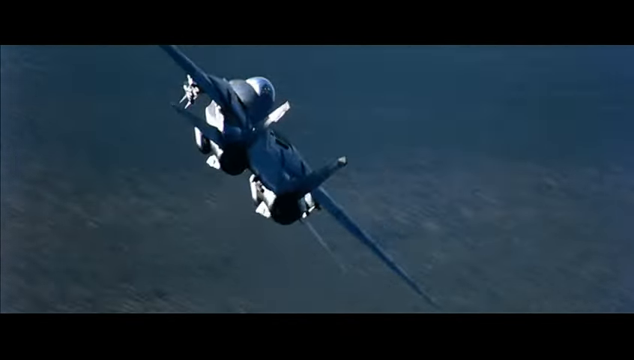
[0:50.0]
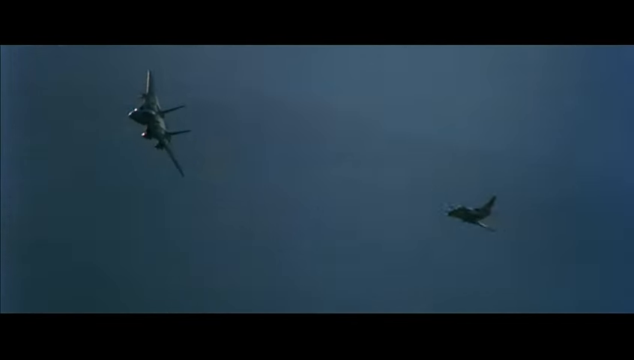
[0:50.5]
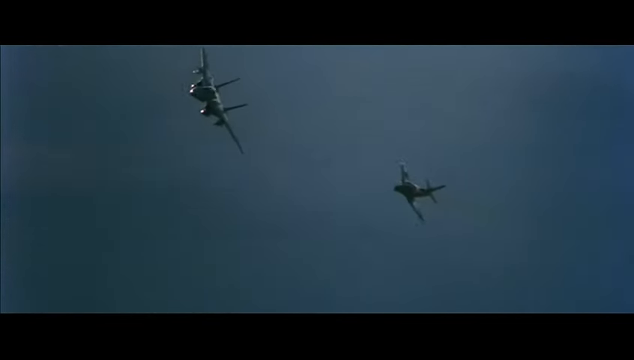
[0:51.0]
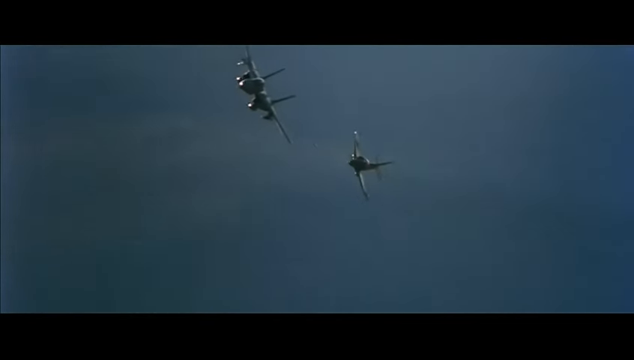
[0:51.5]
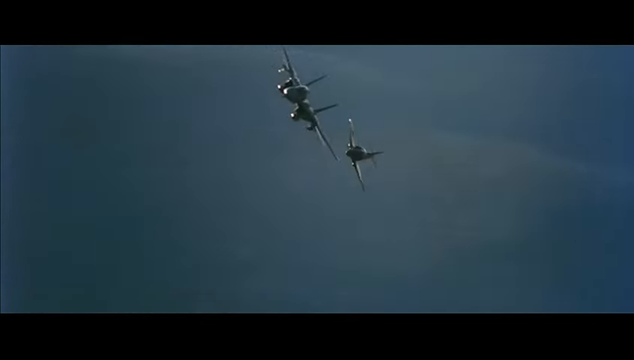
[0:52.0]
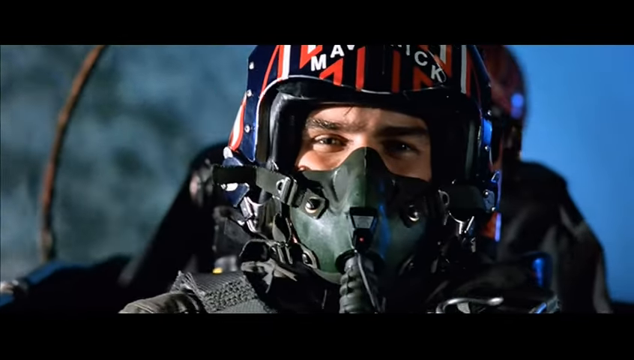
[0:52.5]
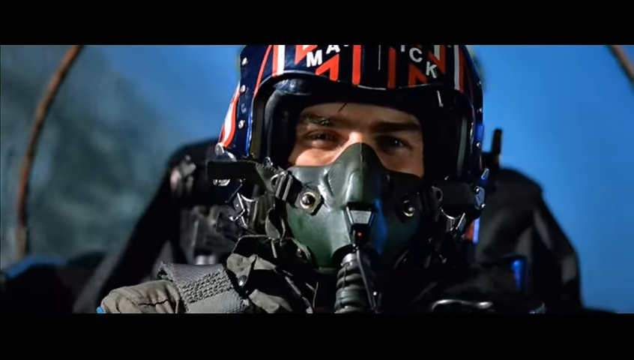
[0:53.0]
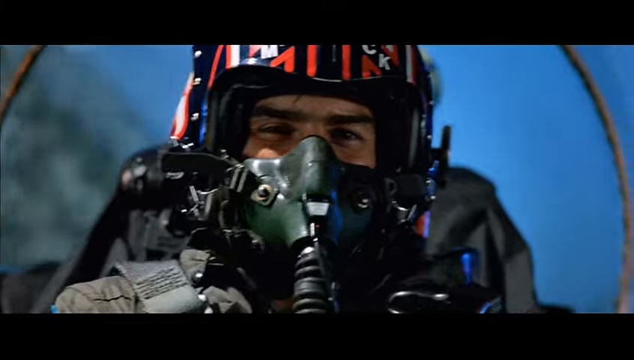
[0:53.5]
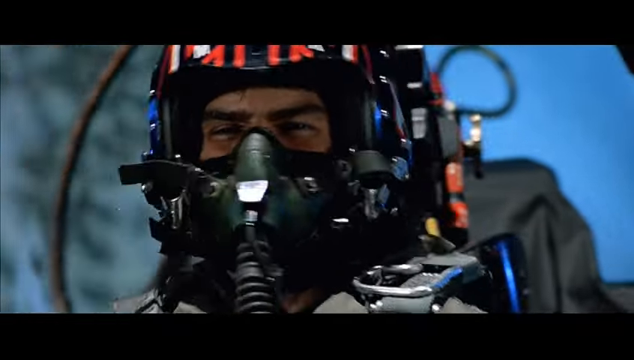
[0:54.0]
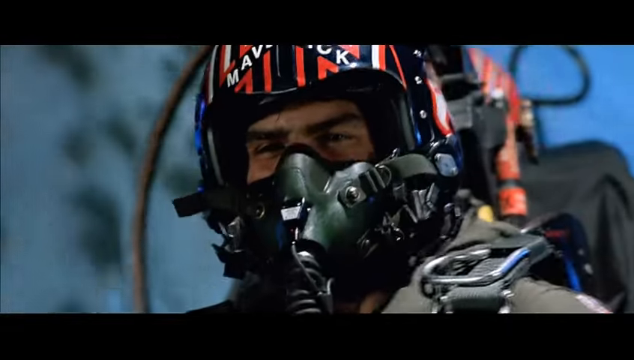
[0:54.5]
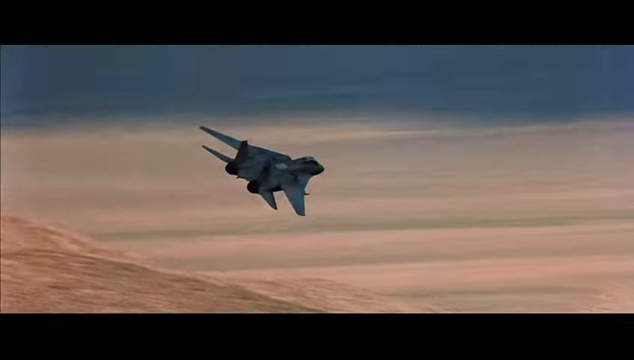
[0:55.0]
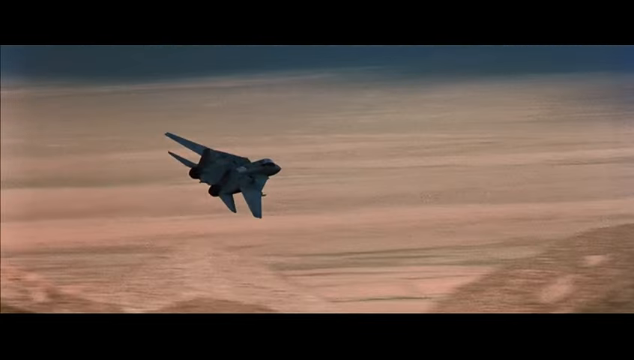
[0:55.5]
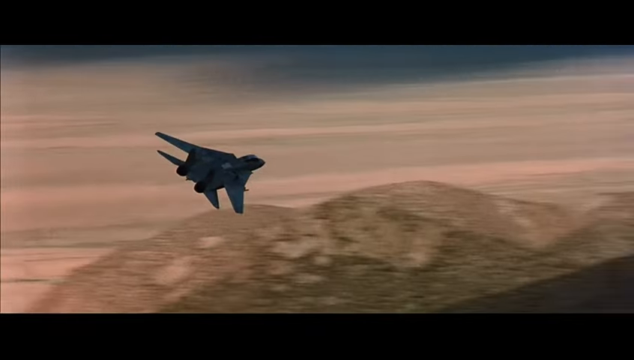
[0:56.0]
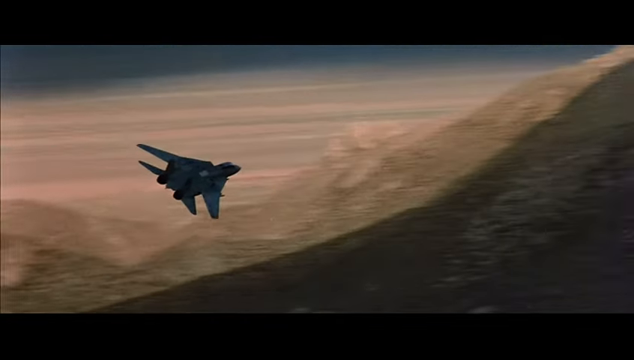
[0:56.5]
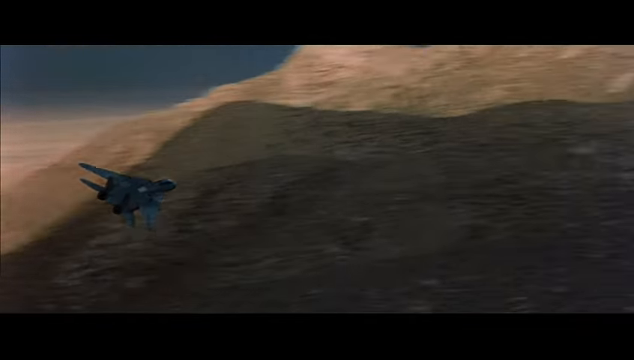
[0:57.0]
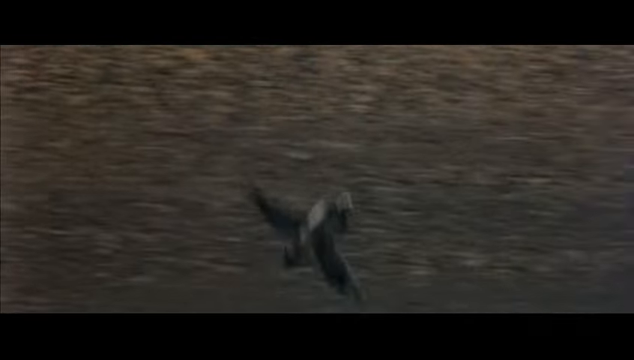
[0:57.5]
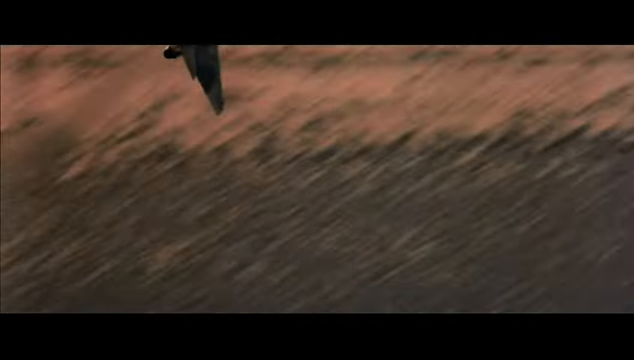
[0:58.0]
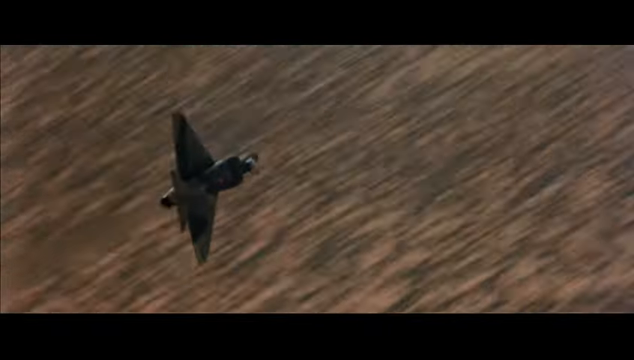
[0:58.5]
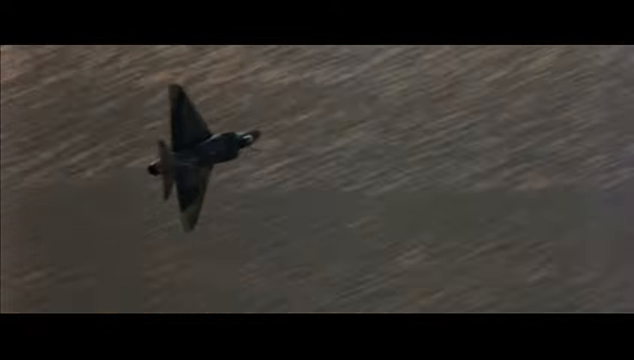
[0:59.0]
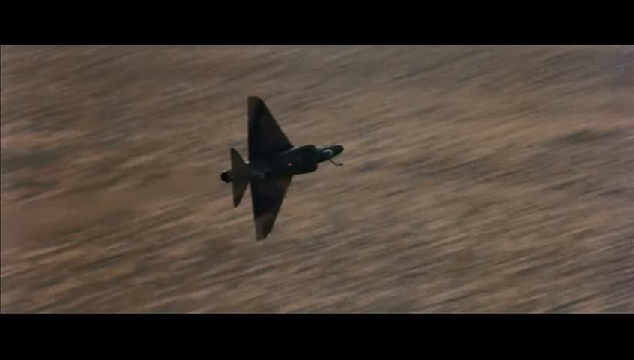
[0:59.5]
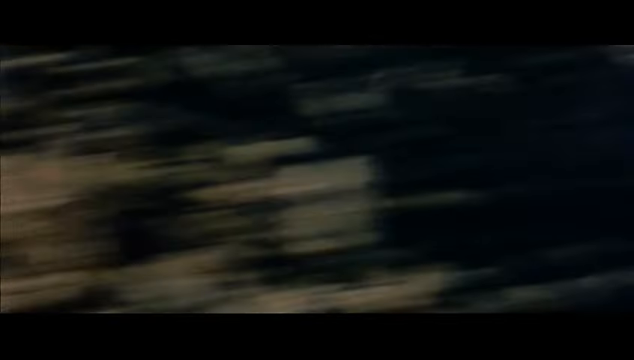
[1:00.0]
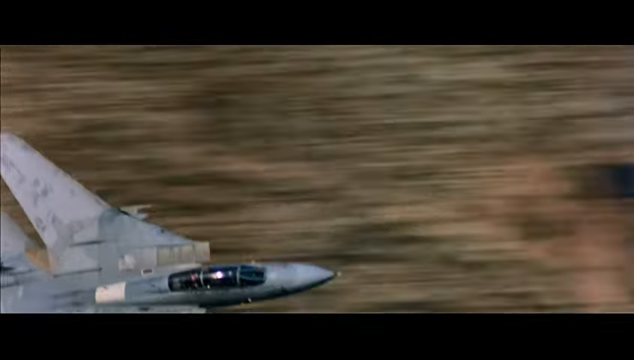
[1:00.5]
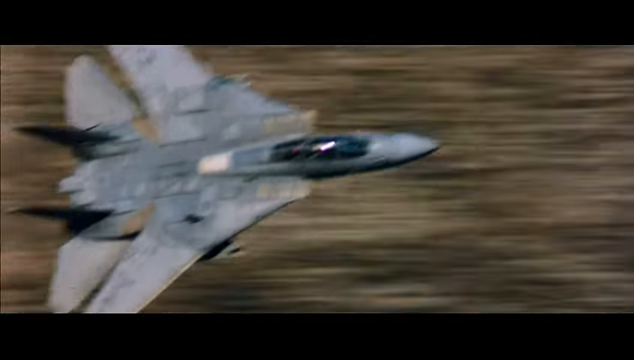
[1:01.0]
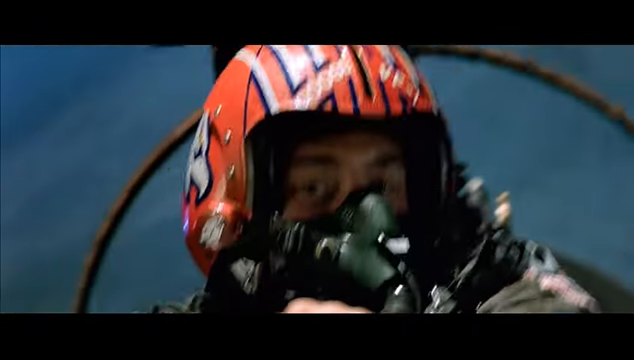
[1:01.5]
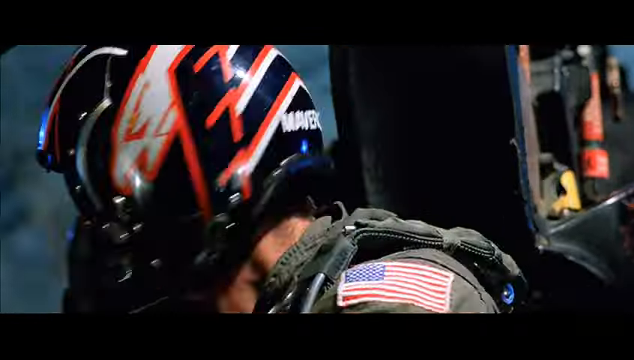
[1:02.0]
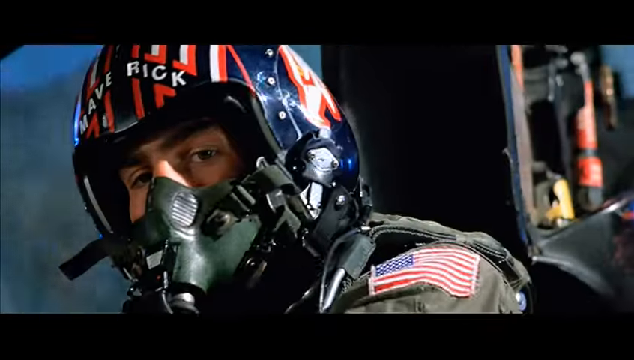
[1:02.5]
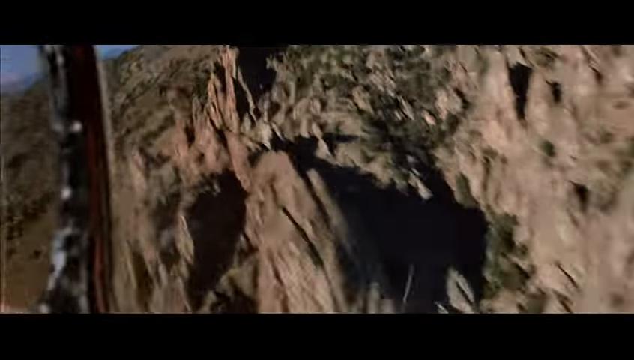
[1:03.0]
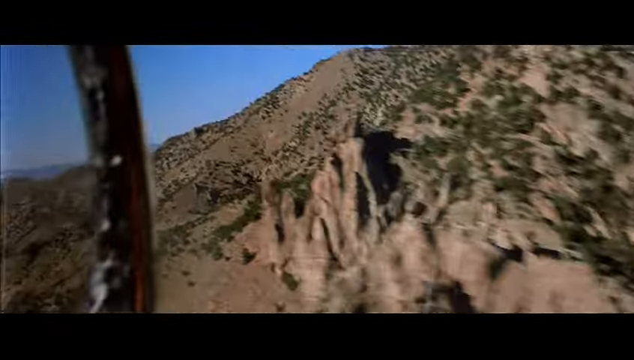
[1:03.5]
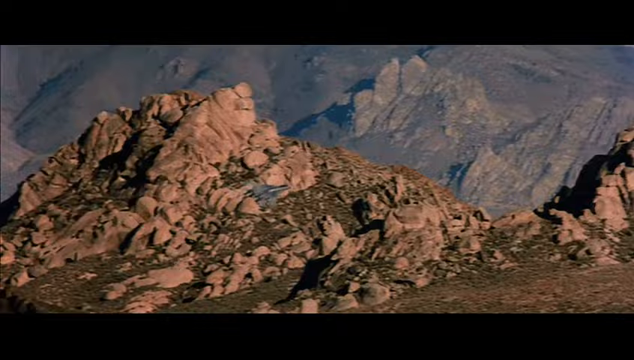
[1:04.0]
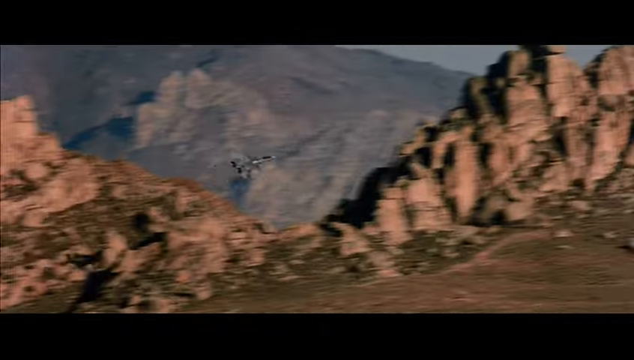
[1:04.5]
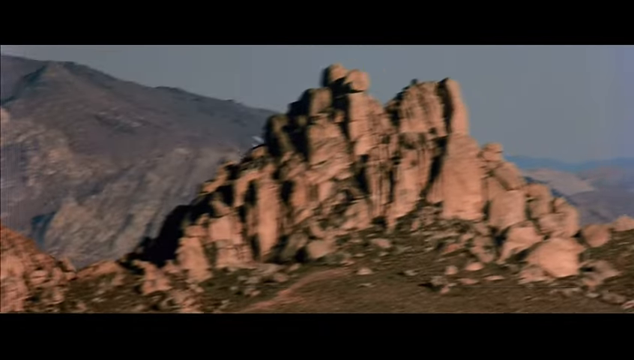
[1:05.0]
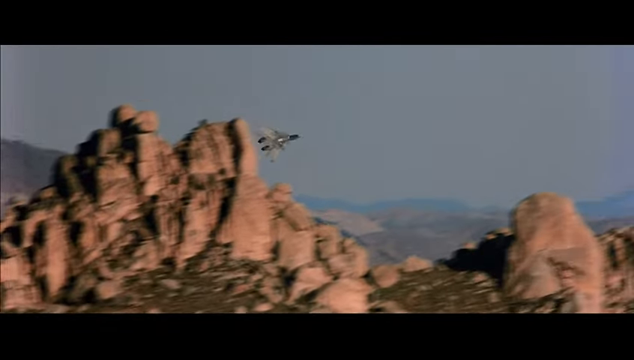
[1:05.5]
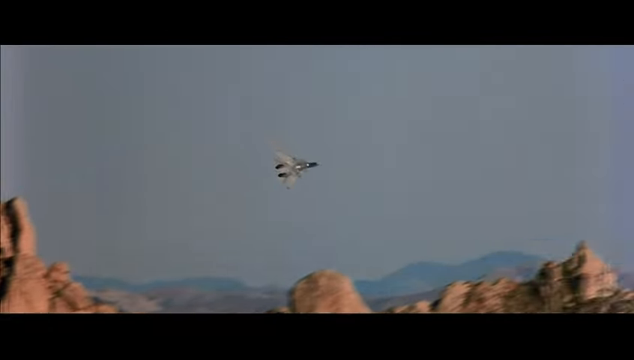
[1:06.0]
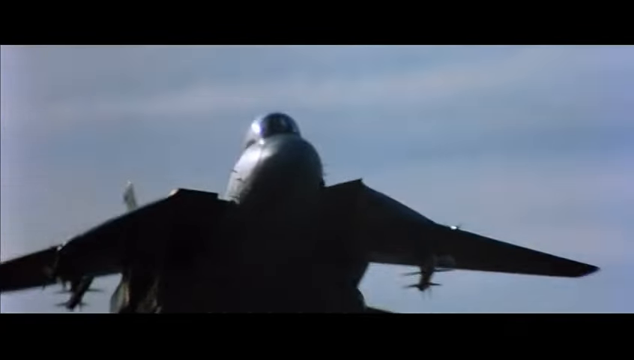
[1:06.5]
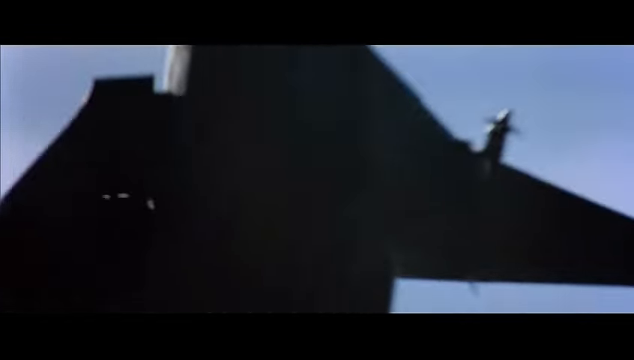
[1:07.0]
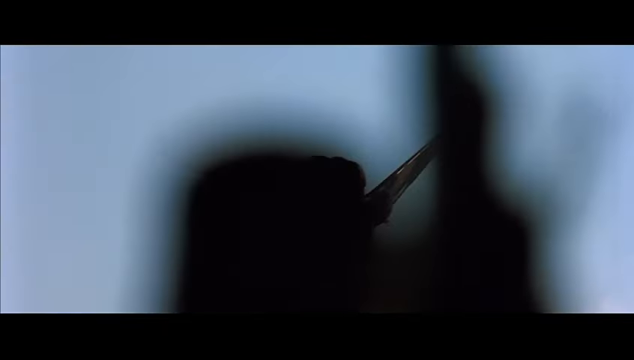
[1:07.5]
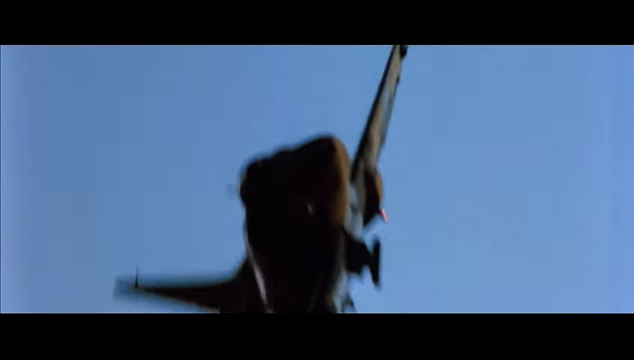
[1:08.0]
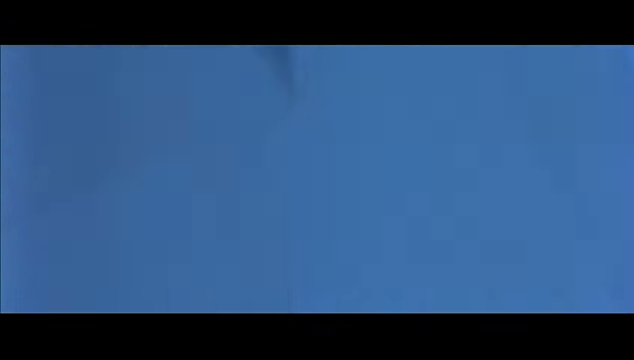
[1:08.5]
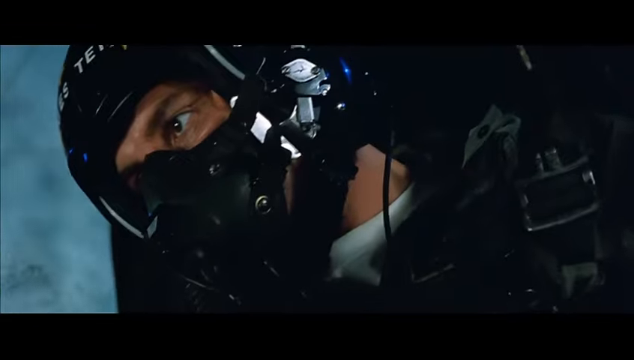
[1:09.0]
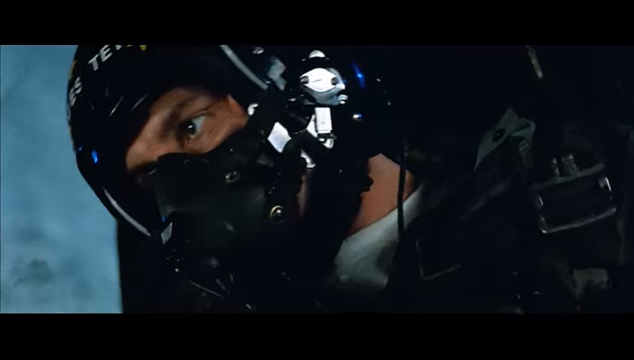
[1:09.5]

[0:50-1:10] The back of a jet fighter is seen as it flies tilted to the side in the sky, with land just visible below. Another shot shows the plane apparently being followed by another jet fighter. Inside a cockpit, a pilot wears a black helmet. A jet fighter appears to fly through a canyon, then flies upwards and to the left. Inside another cockpit, a pilot wears a red, black and blue helmet with the word "Maverick" and has an American flag on his left shoulder. A shot from inside the plane looking out shows a canyon with rocks and shrubs everywhere and a clear blue sky. A distant shot shows the jet fighter coming from the left of the screen through the canyon, disappearing behind some rocks and emerging on the other side. From the ground, looking up, the jet fighter passes overhead and then heads vertically upwards.